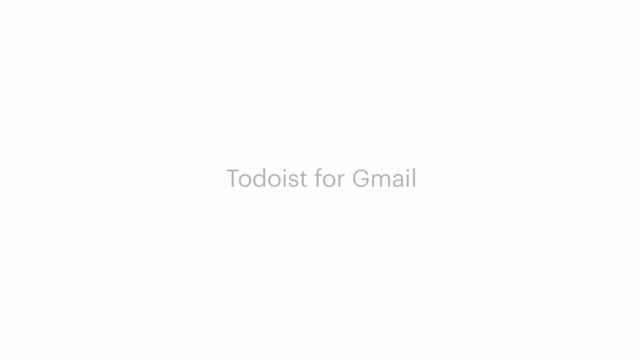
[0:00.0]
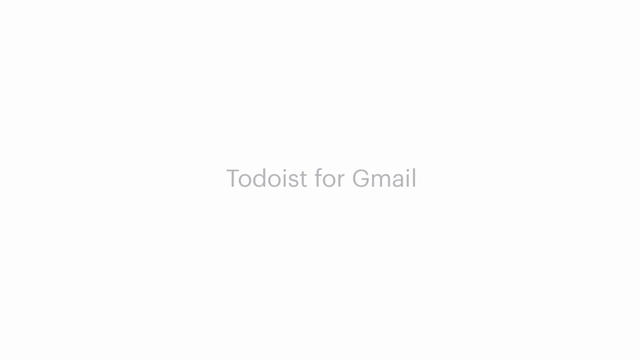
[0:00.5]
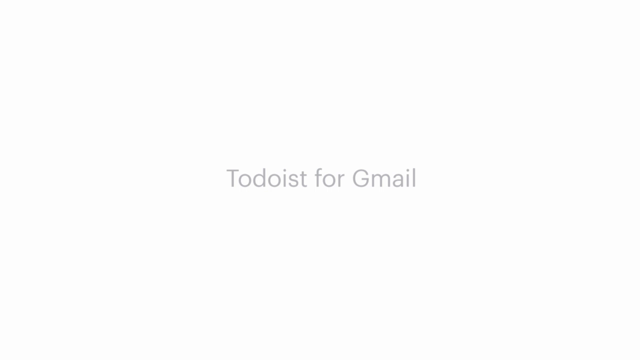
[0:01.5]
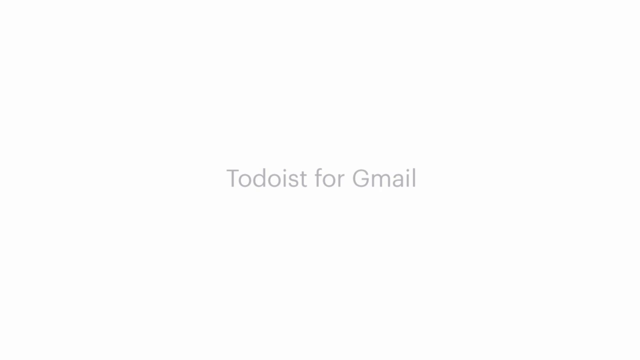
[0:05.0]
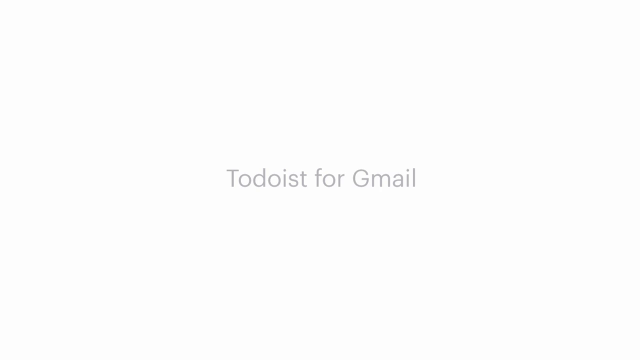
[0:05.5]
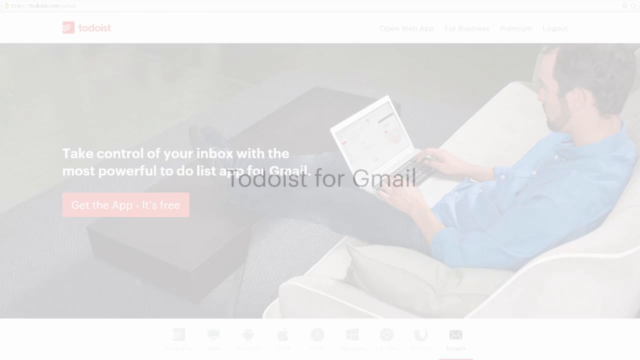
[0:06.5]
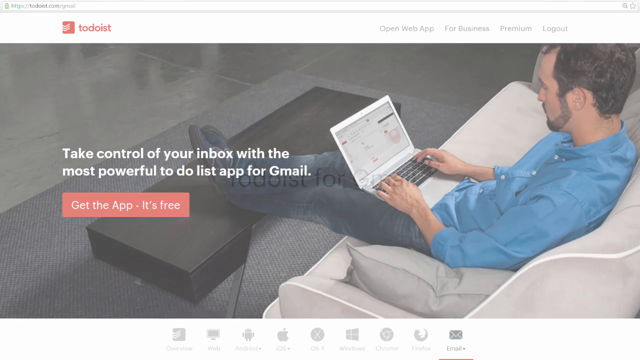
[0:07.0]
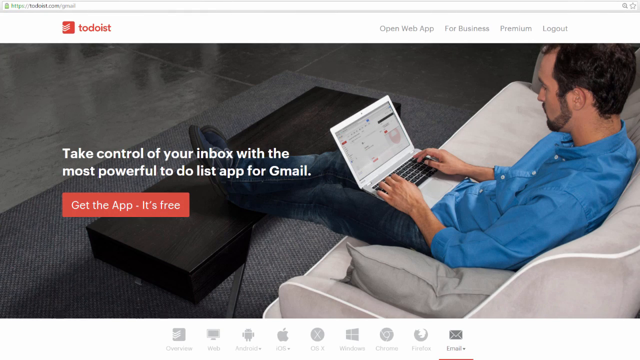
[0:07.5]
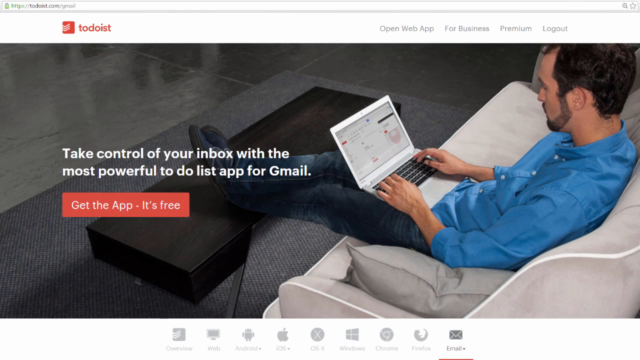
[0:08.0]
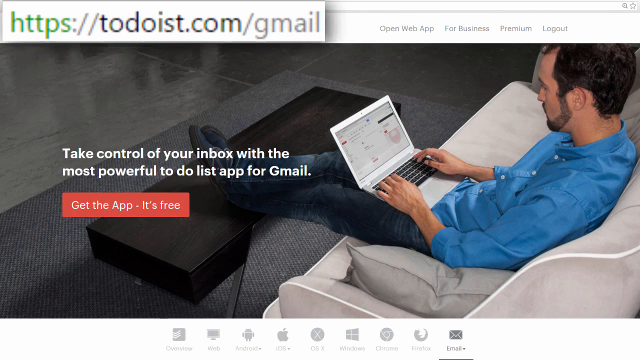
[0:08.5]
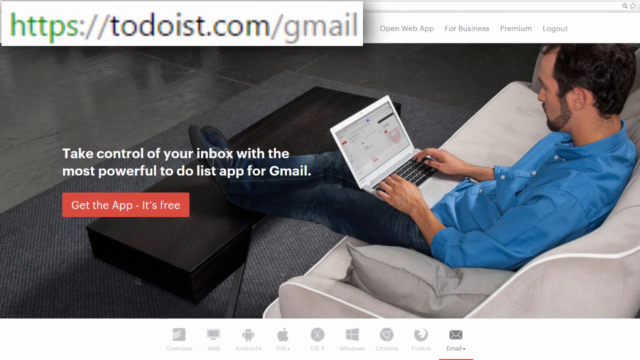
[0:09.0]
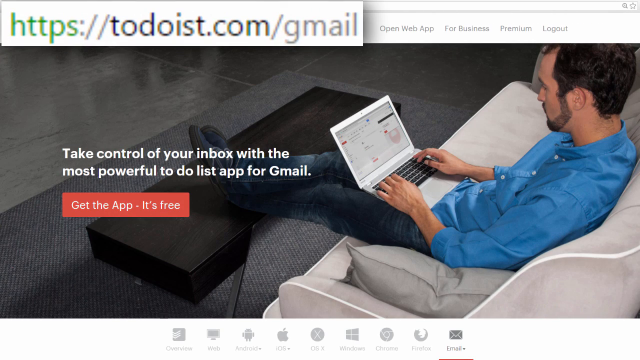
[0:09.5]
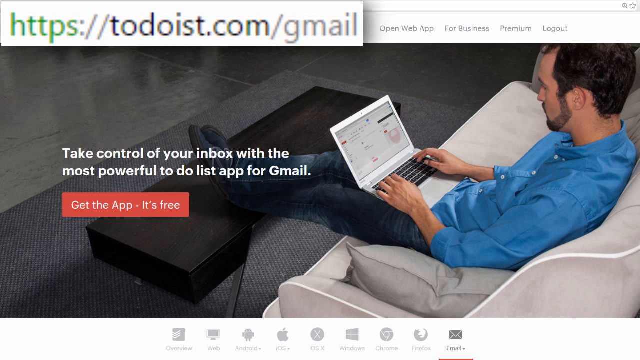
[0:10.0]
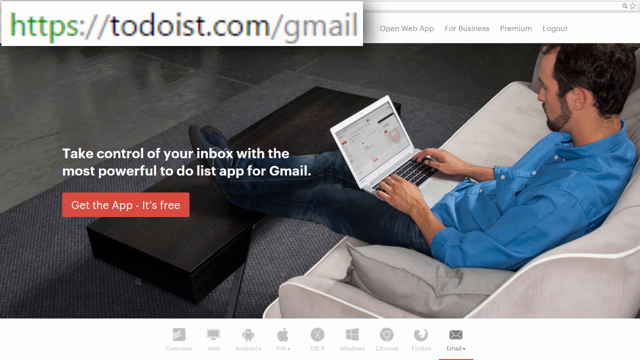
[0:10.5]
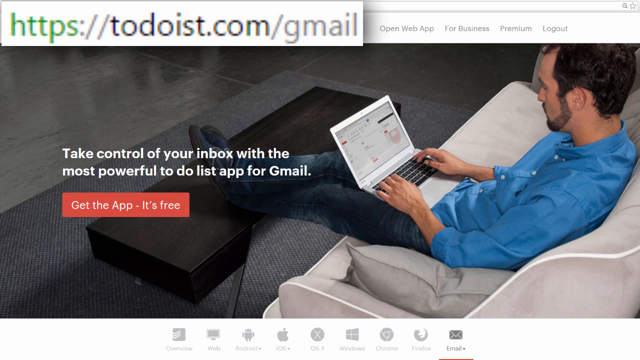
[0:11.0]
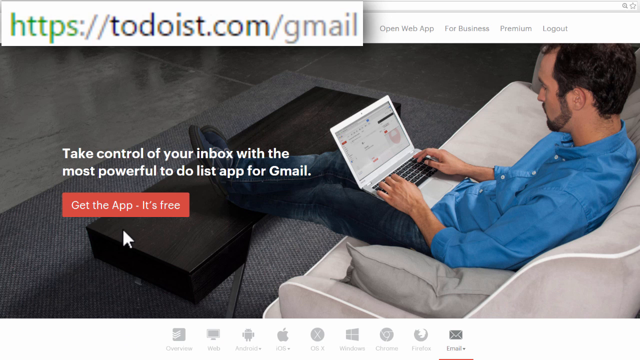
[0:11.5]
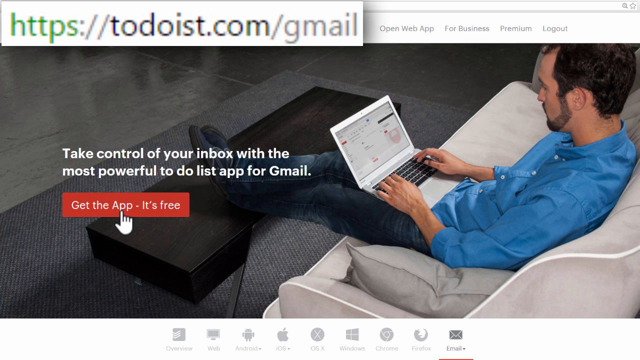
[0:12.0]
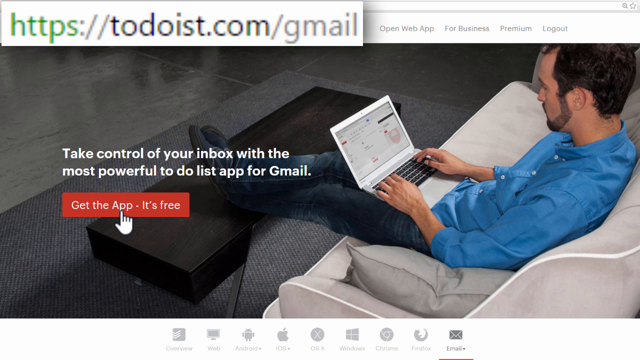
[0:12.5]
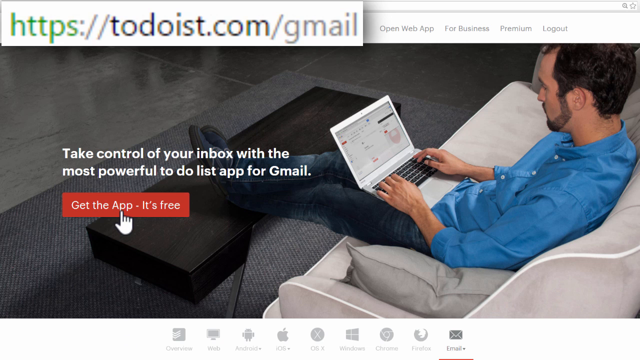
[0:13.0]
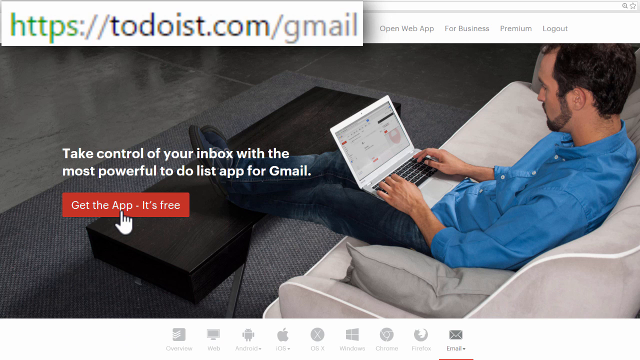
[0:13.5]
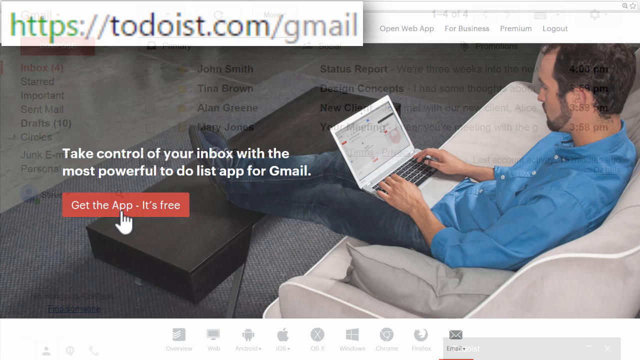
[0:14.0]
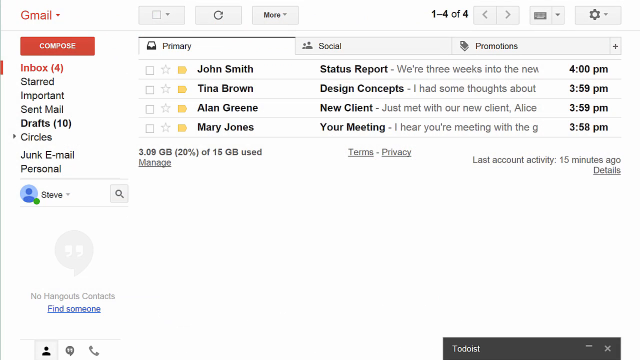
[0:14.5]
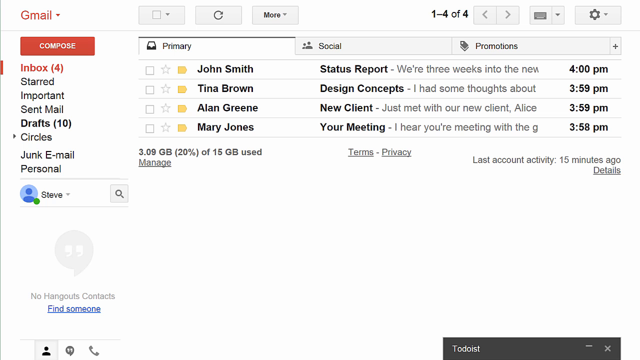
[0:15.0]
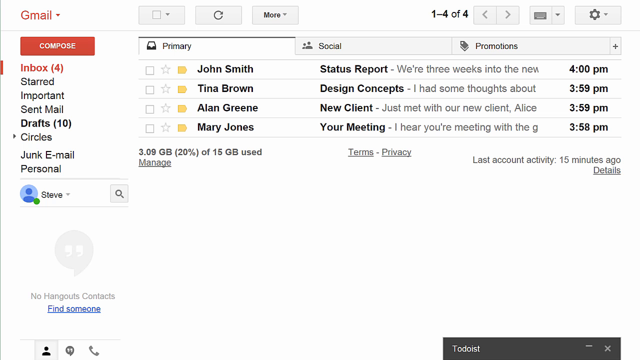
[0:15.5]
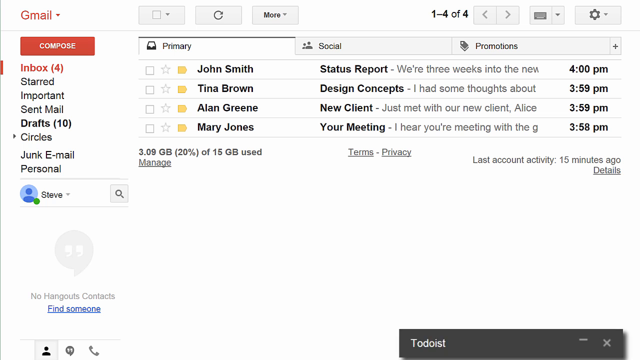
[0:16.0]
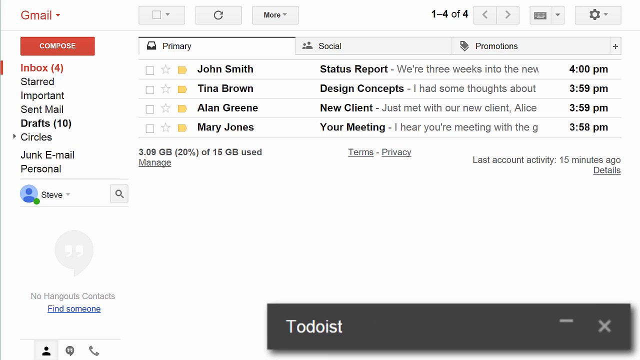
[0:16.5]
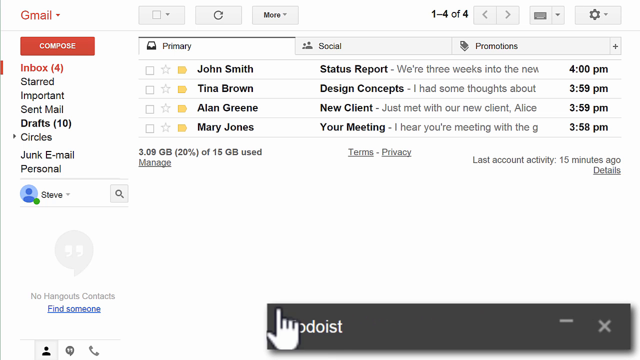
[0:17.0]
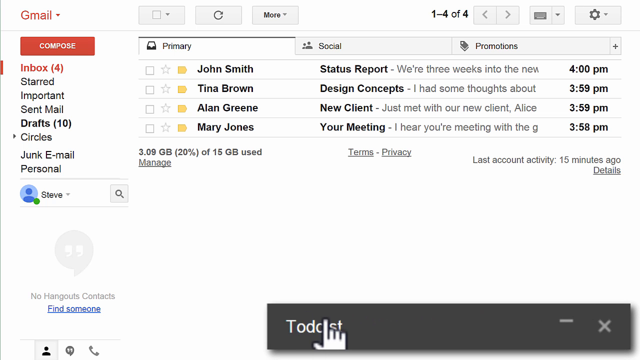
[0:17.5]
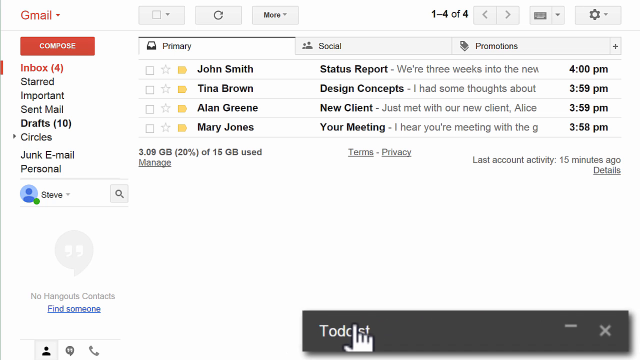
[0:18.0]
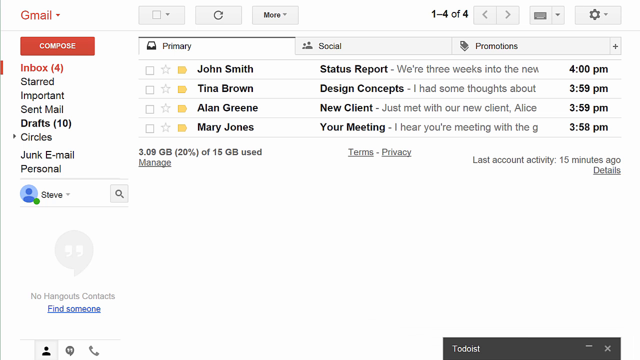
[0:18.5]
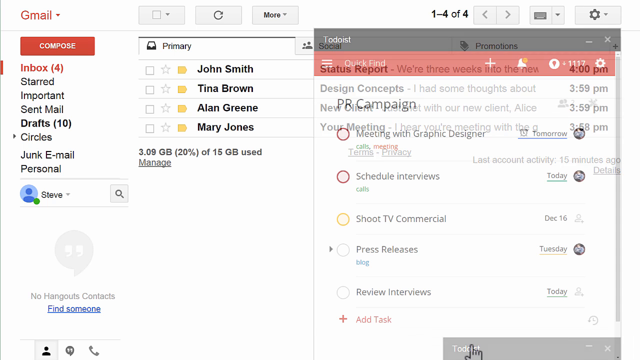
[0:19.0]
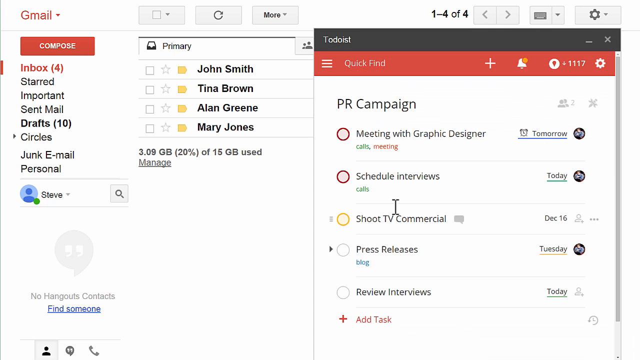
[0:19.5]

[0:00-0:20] The video opens on a white background with small light gray letters in the center that say "Todoist for Gmail." The screen then switches to a man sitting on a light gray, possibly off-white, couch with his feet propped up on a dark brown coffee table and a silver laptop in his lap. He wears a light blue, three-quarter sleeve button-up shirt, is clean cut, and has black, maybe dark brown, hair. Off to his left, white letters read "take control of your inbox with the most powerful to do list app for Gmail," followed by a red button that looks clickable with white letters that say "get the app." At the top left a website address pops up, with "https" in green followed by "//todoist.com/gmail." A mouse hand then clicks the clickable button.